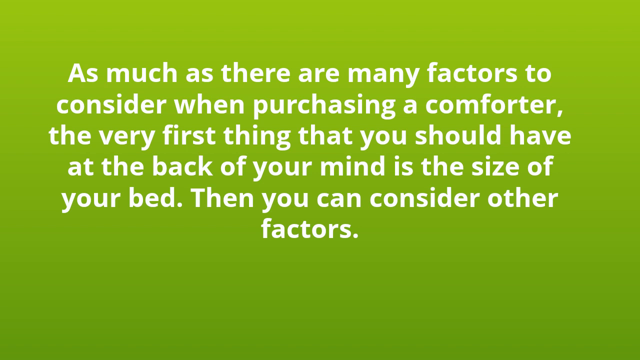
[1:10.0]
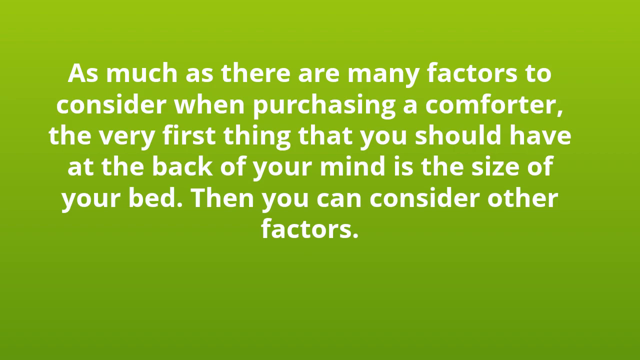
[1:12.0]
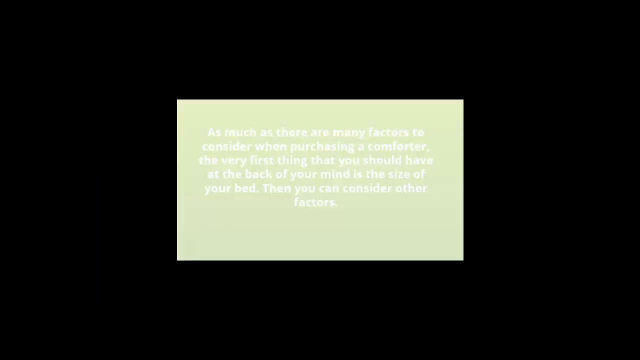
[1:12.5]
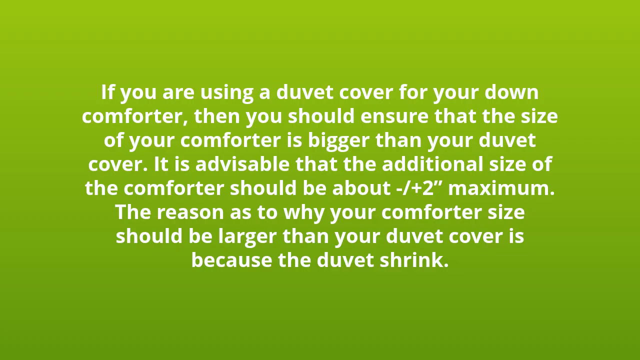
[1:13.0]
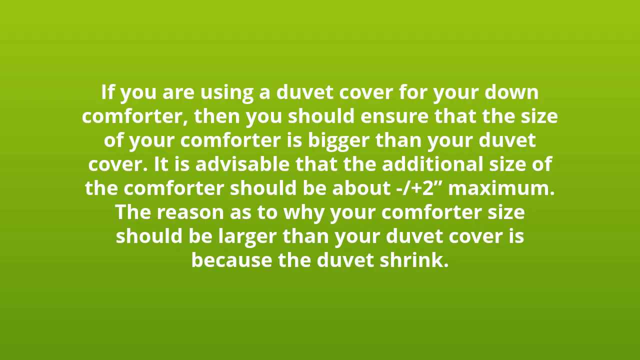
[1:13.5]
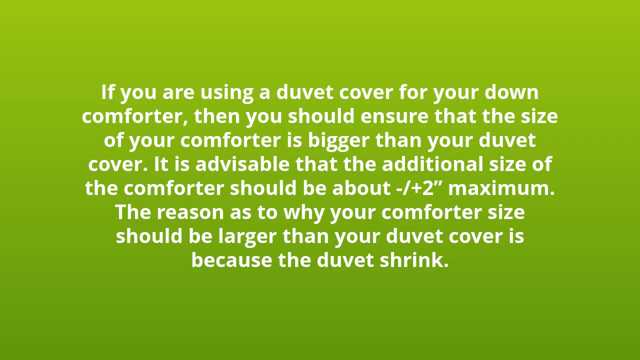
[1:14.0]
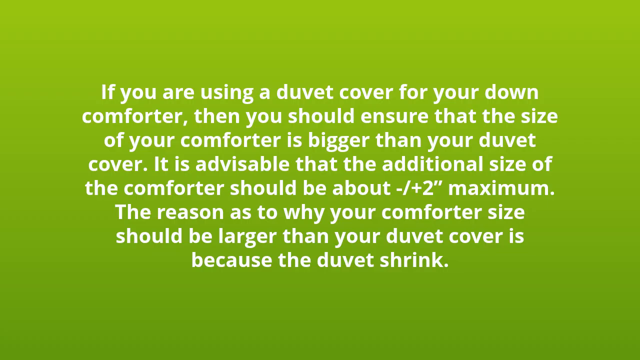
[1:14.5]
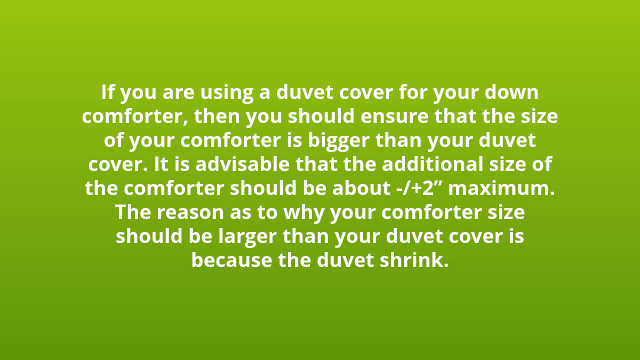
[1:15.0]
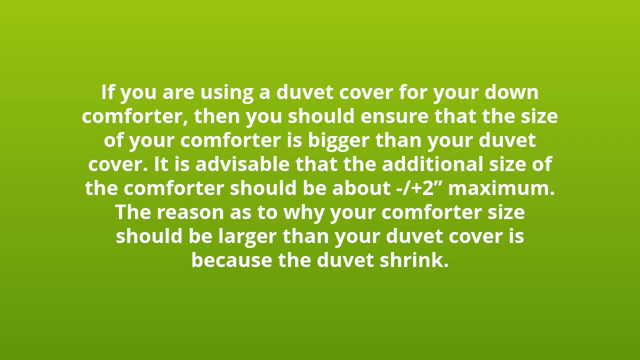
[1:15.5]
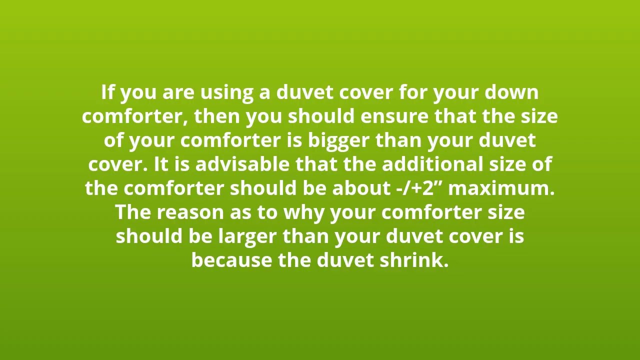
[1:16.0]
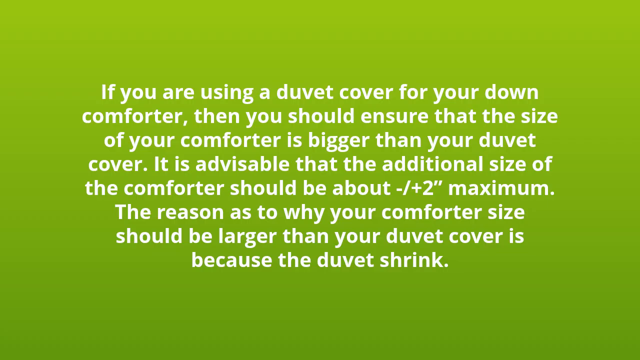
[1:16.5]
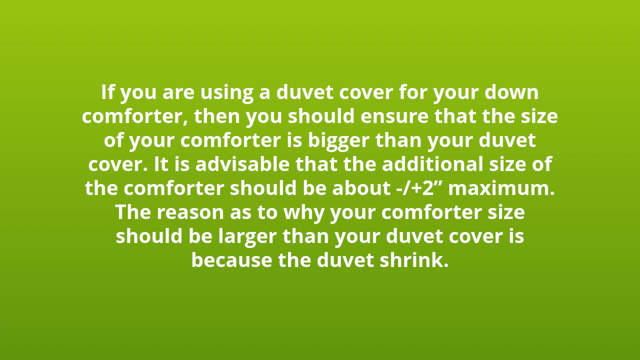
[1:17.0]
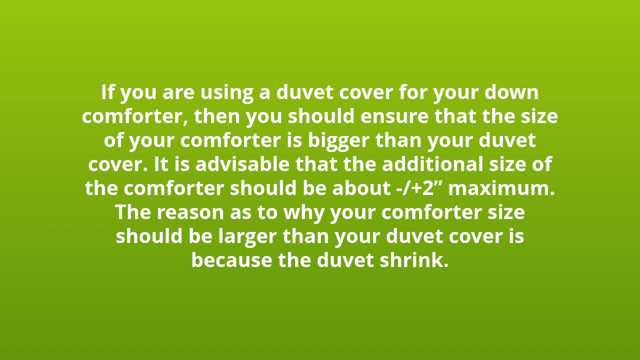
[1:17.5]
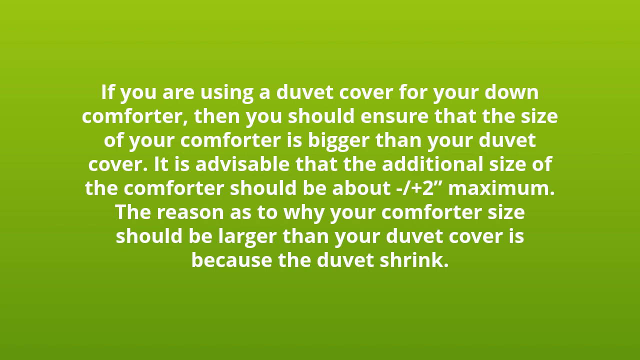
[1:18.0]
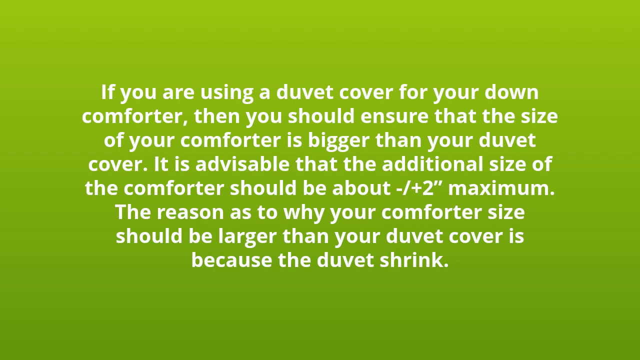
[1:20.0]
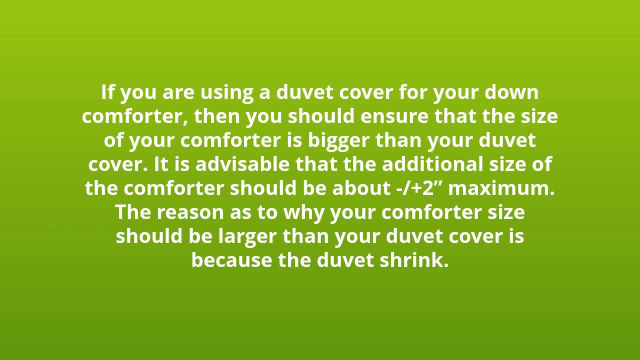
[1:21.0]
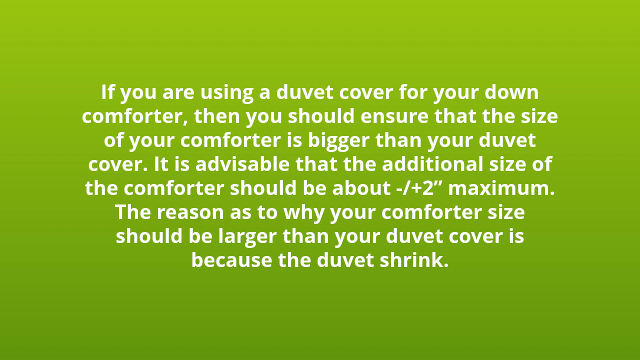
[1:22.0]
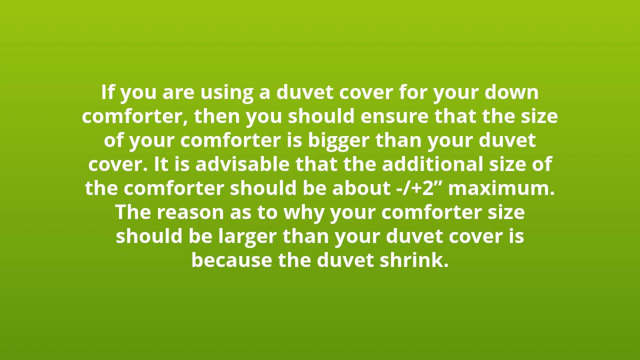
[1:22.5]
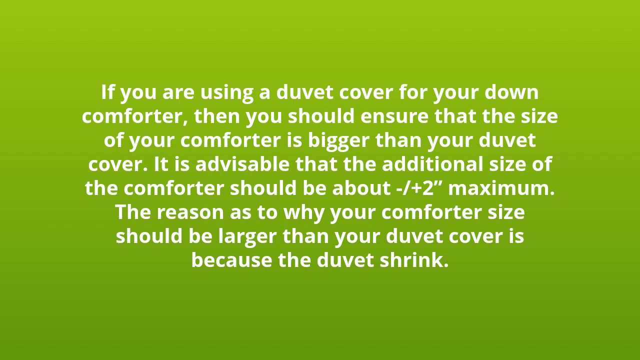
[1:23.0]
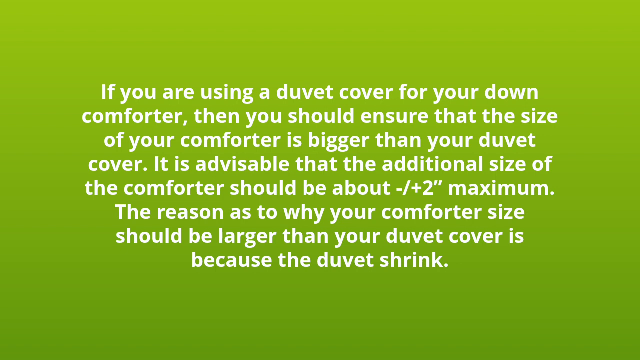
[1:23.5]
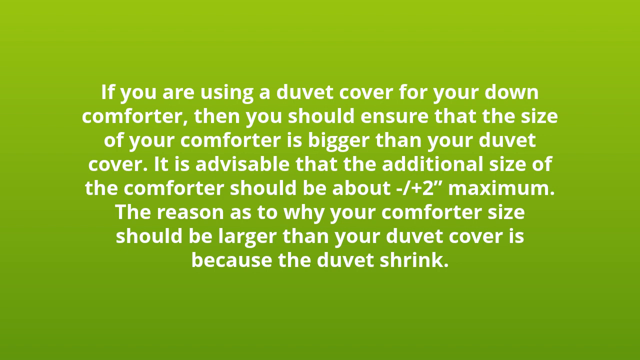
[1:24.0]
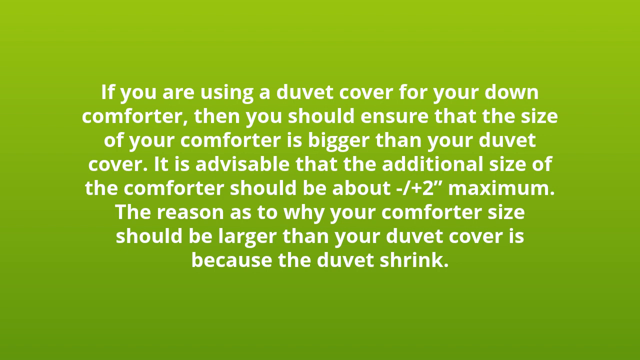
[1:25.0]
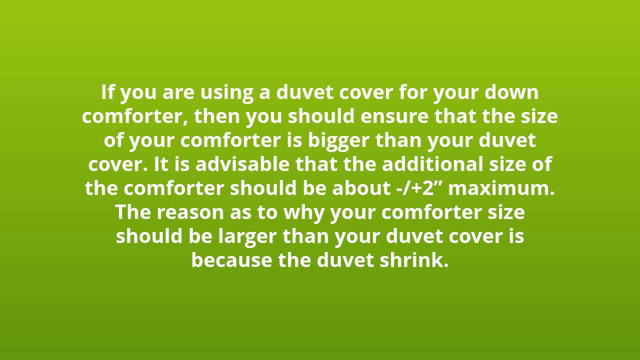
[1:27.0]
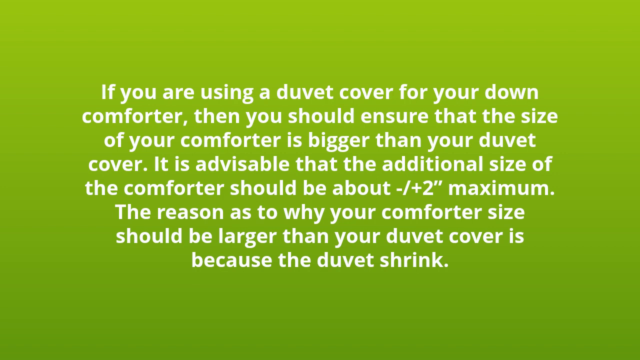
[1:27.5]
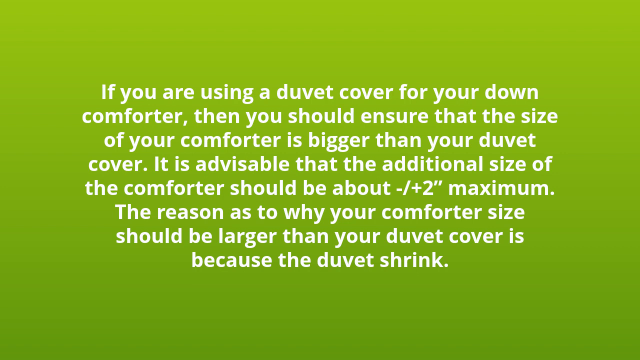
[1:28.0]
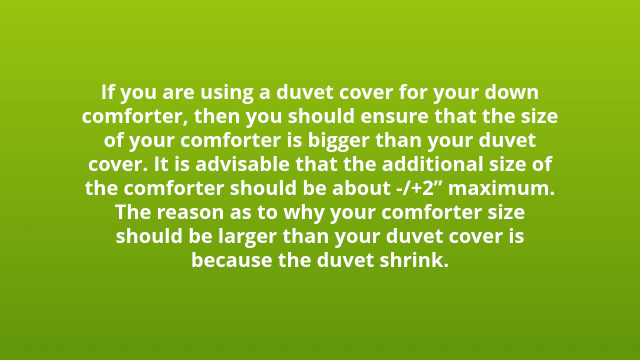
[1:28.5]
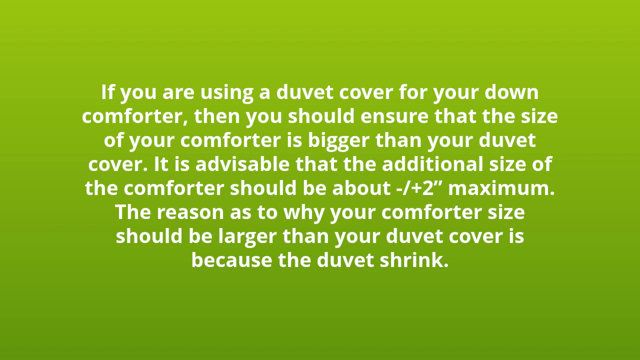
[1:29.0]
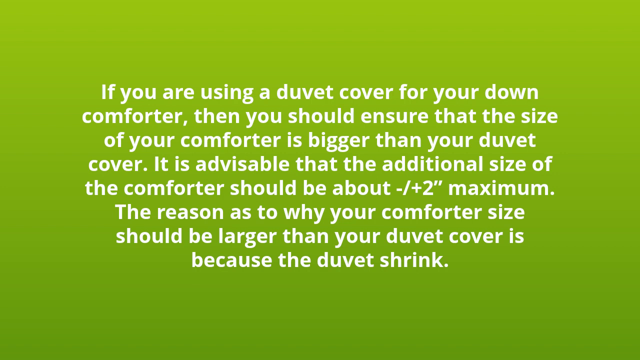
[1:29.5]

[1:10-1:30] In this ad for down comforters, every slide is green with white words centered in the middle. The slide reads: "As much as there are many factors to consider when purchasing a comforter, the very first thing that you should have at the back of your mind is the size of your bed. Then, you can consider other factors." The slide then switches in a transition where it sort of shrinks into the middle and the new one kind of expands. The new slide reads: "If you are using a duvet cover for your down comforter, then you should ensure that the size of your comforter is bigger than your duvet cover. It is advisable that the additional size of the comforter should be about minus / plus two inches maximum. The reason as to why your comforter size should be larger than your duvet cover is because the duvets shrink."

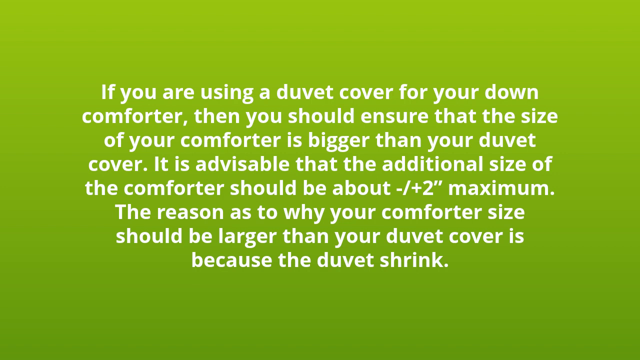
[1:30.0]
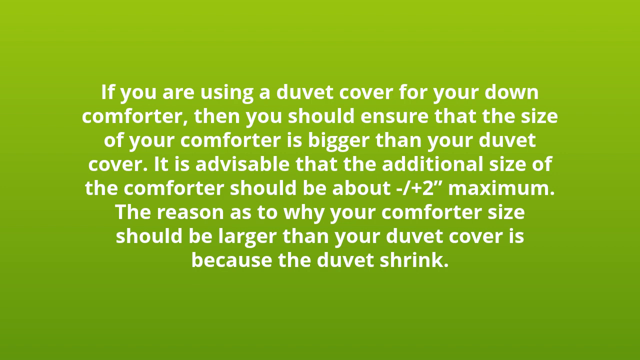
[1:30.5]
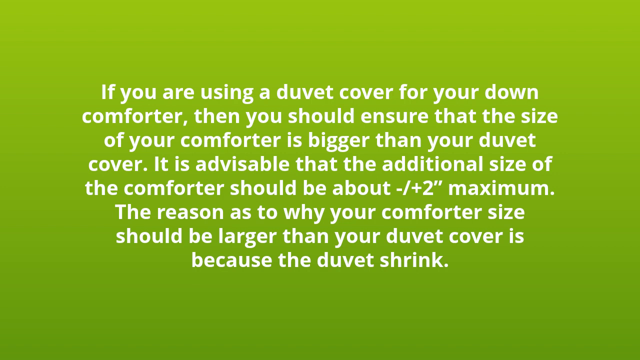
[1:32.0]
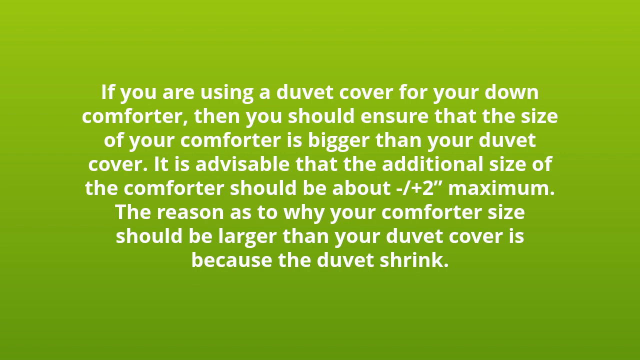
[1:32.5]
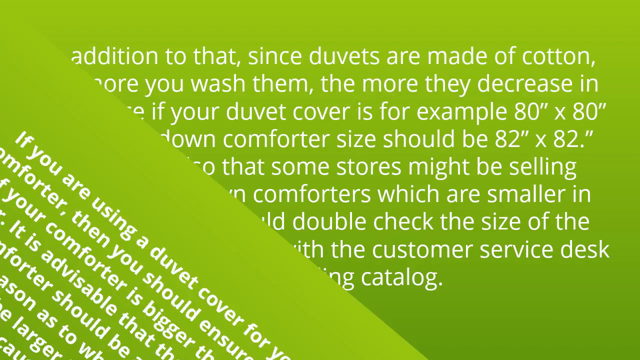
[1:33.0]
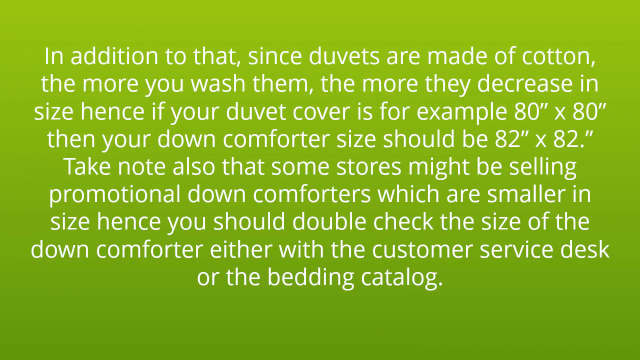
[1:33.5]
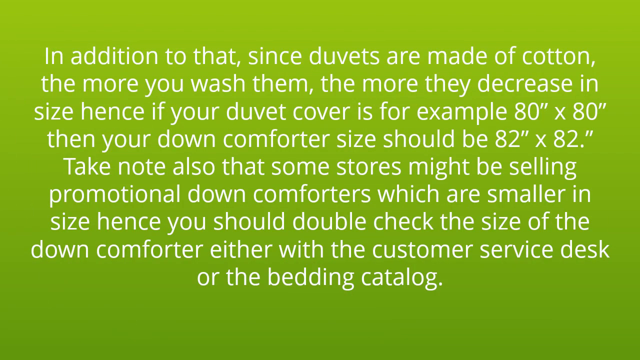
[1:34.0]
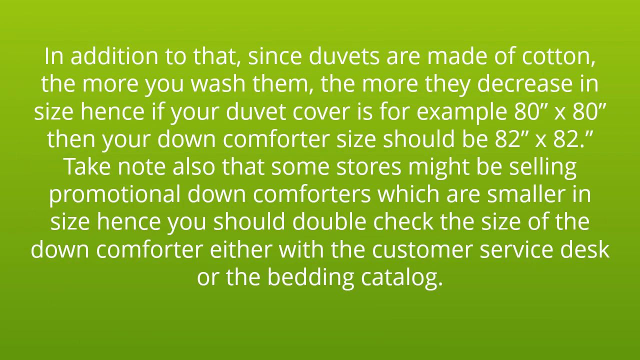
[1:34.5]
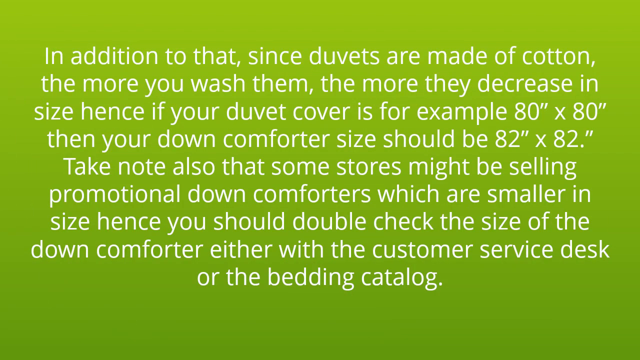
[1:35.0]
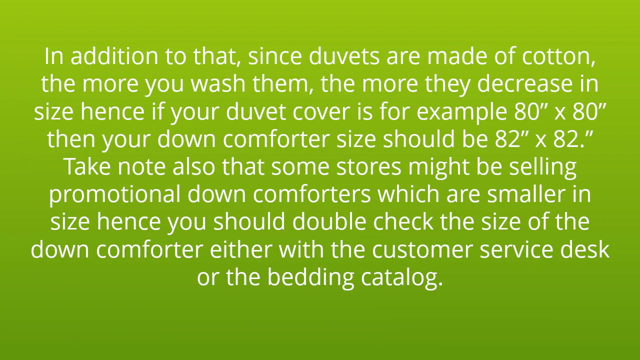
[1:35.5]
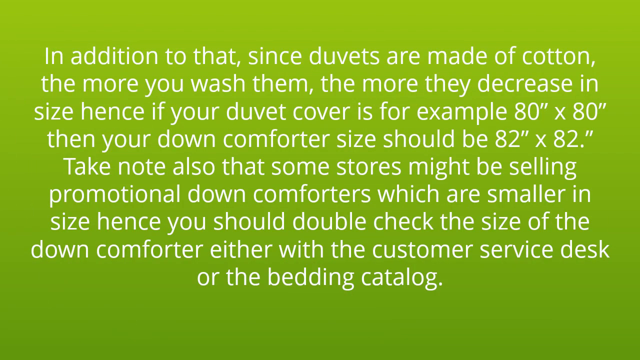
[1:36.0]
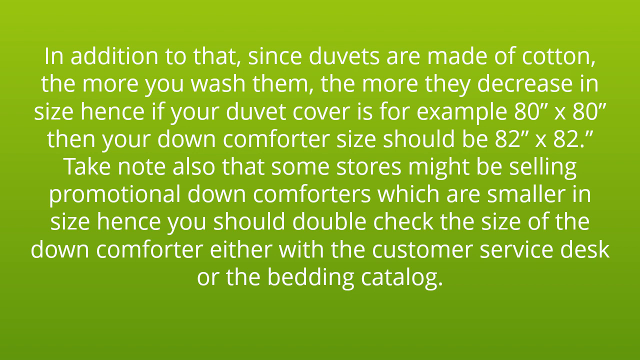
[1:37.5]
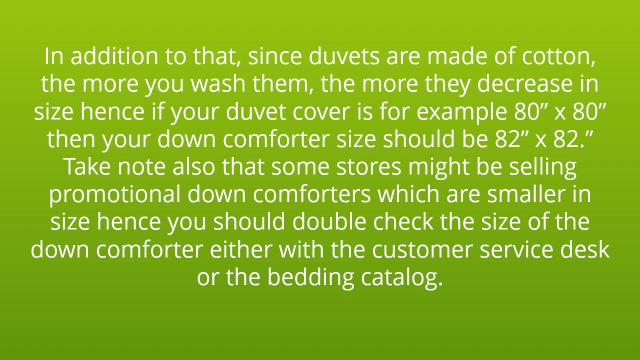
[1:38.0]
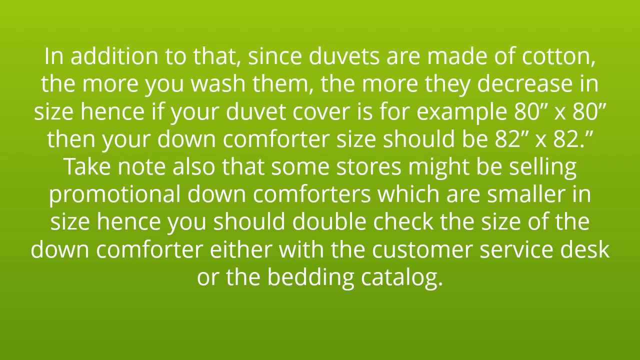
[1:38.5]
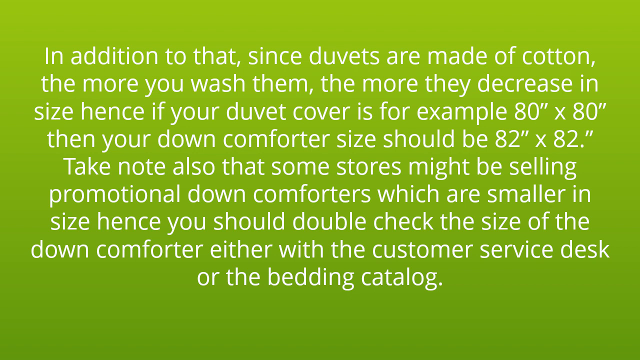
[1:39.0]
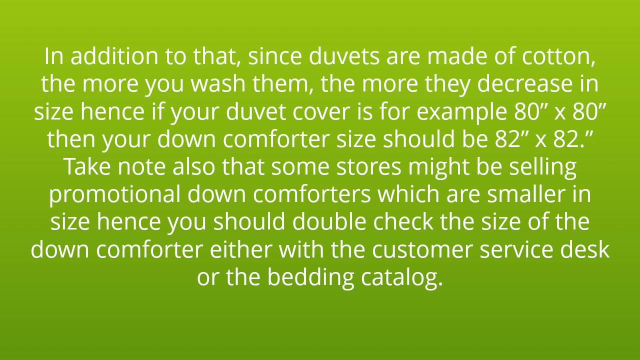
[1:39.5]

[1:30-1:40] The ad for comforters consists of green slides with words centered in the middle in white. The slide reads: "If you are using a duvet cover for your down comforter, then you should ensure that the size of your comforter is bigger than your duvet cover. It is advisable that the additional size of the comforter should be about minus / plus two inches maximum. The reason as to why your comforter size should be larger than your duvet cover is because the duvet shrink."